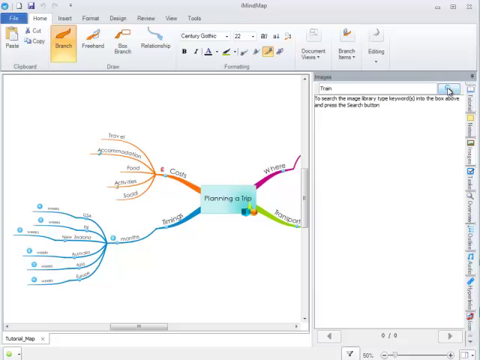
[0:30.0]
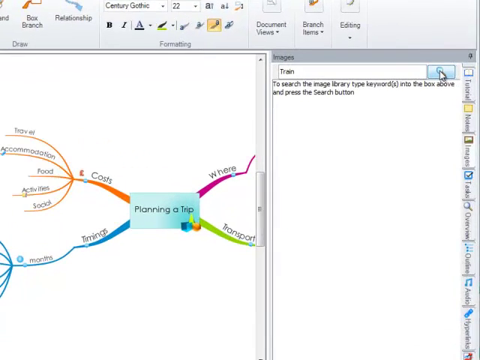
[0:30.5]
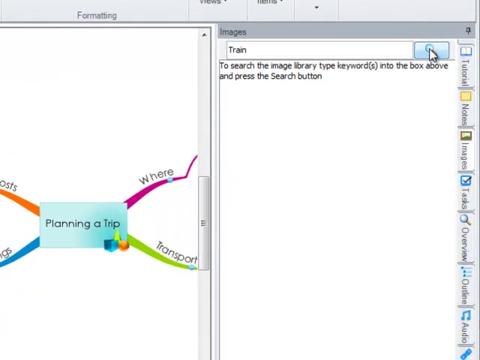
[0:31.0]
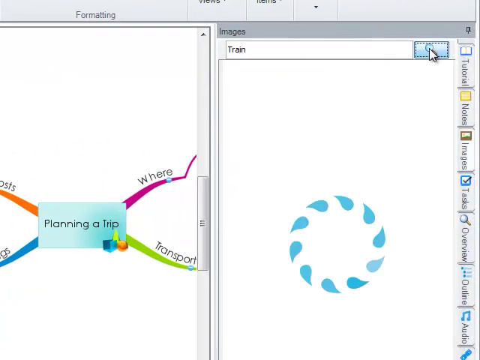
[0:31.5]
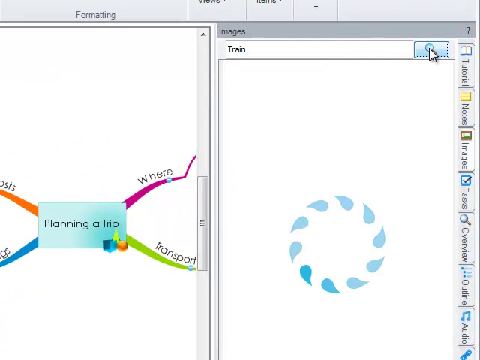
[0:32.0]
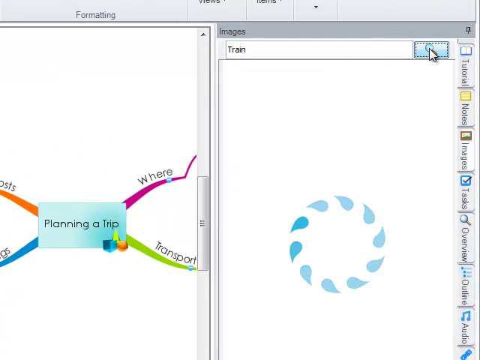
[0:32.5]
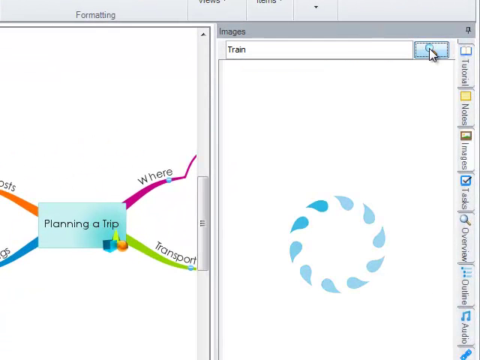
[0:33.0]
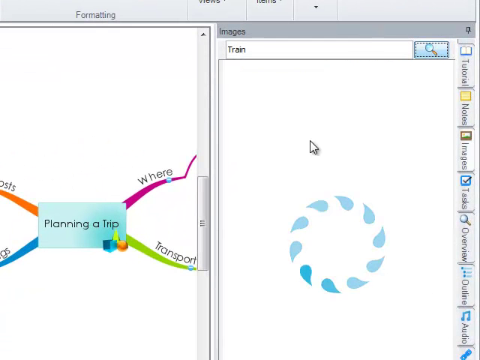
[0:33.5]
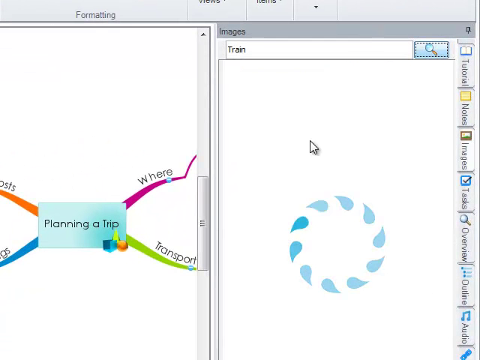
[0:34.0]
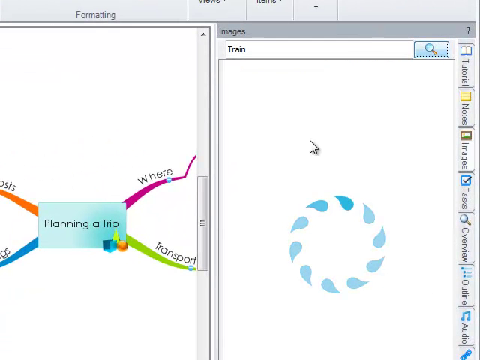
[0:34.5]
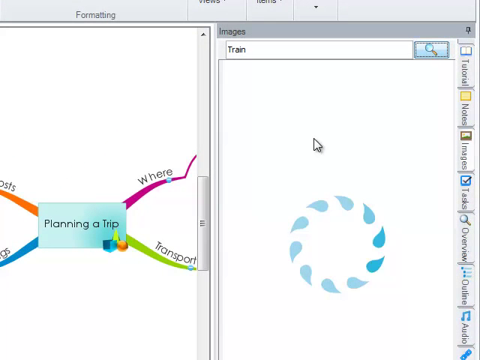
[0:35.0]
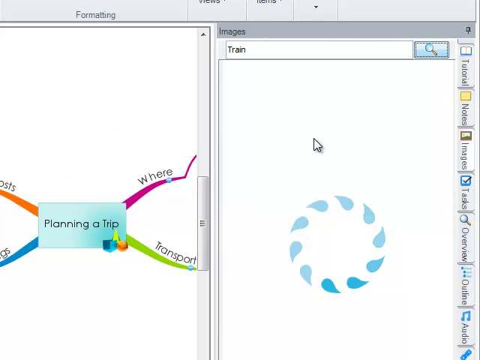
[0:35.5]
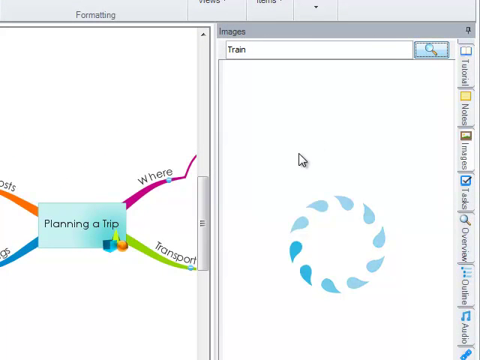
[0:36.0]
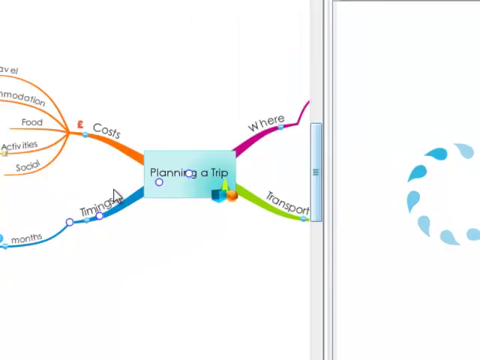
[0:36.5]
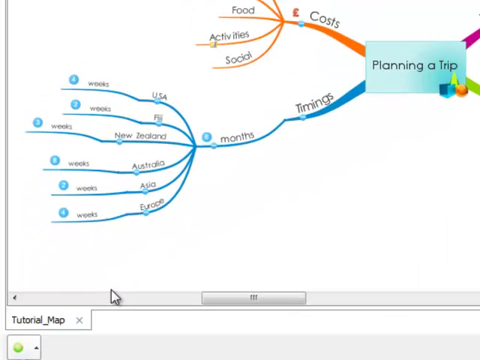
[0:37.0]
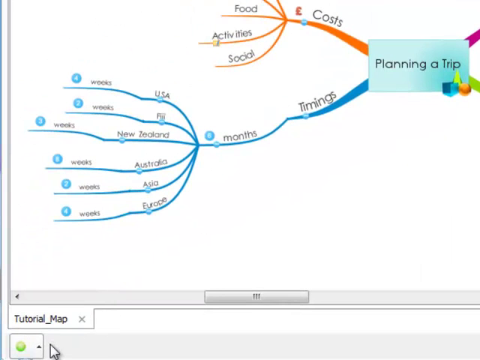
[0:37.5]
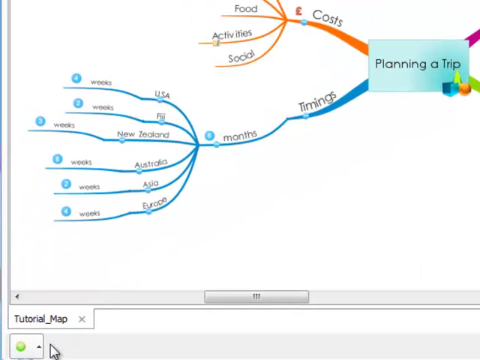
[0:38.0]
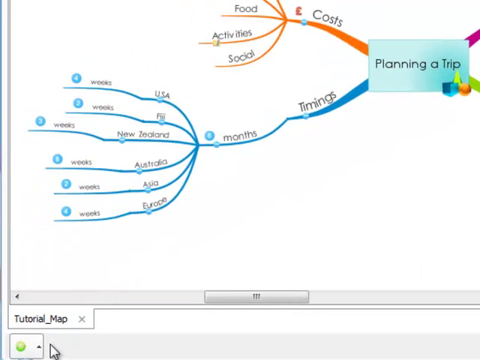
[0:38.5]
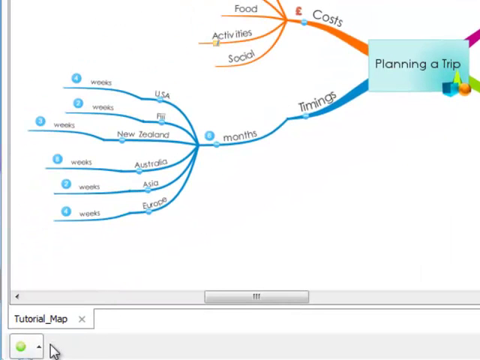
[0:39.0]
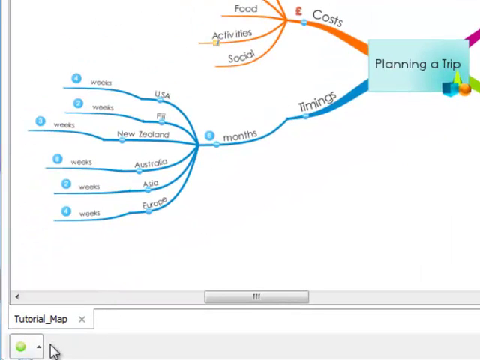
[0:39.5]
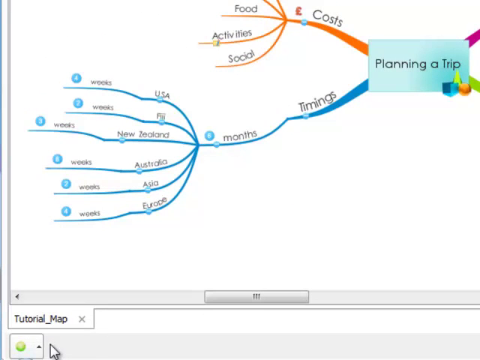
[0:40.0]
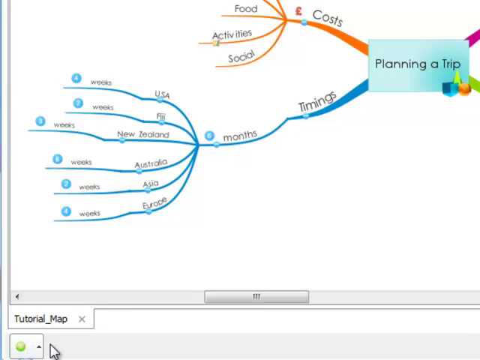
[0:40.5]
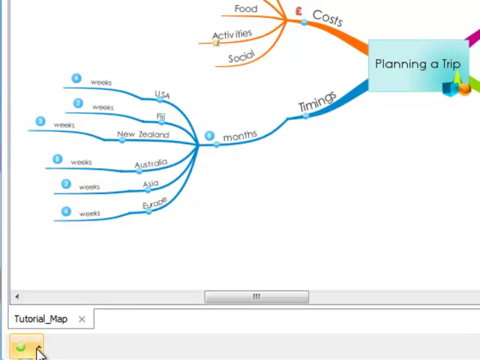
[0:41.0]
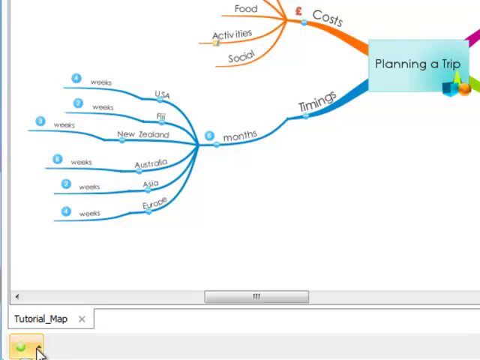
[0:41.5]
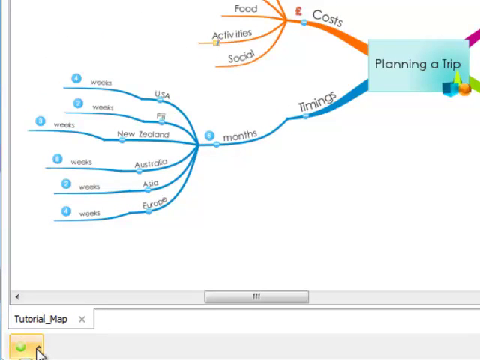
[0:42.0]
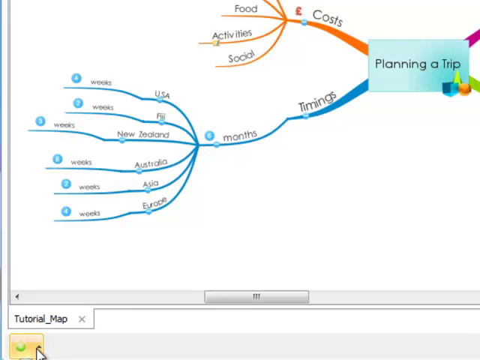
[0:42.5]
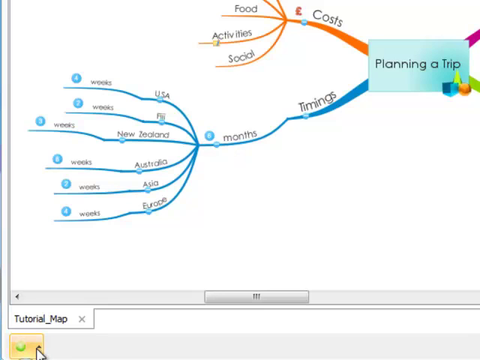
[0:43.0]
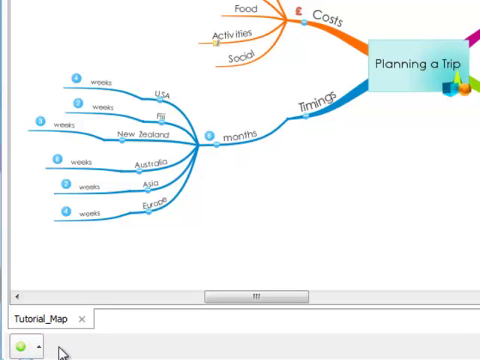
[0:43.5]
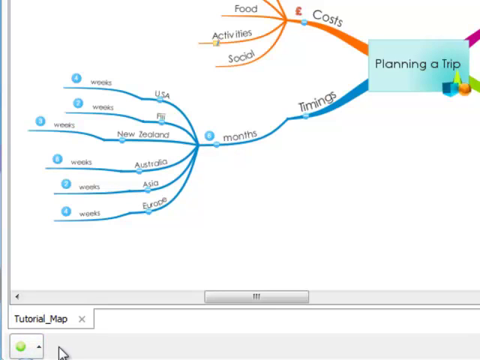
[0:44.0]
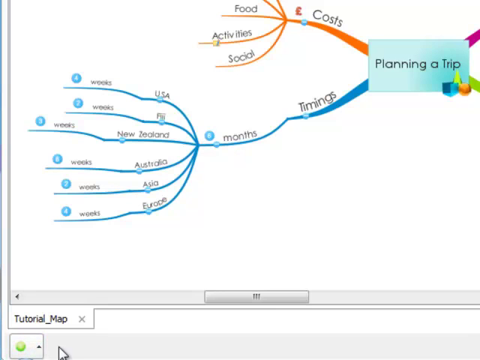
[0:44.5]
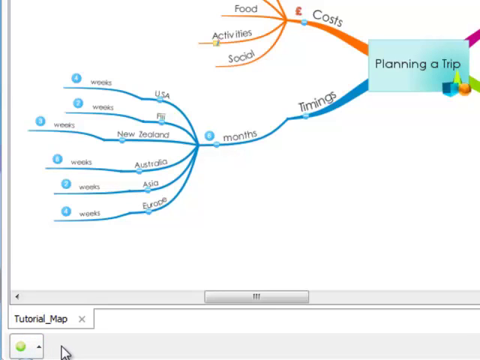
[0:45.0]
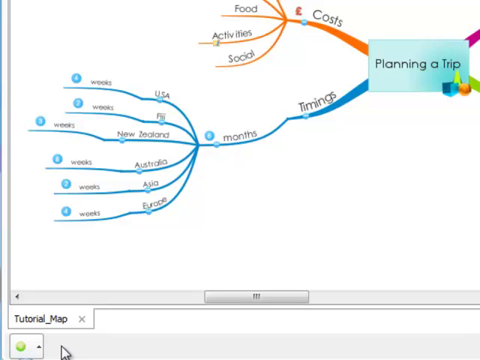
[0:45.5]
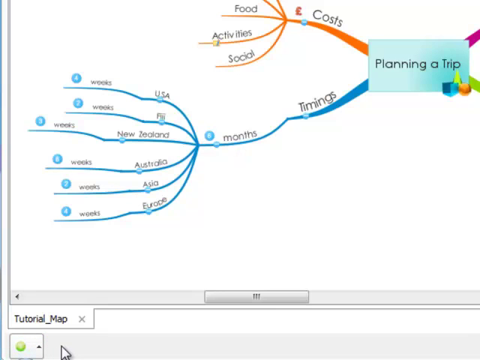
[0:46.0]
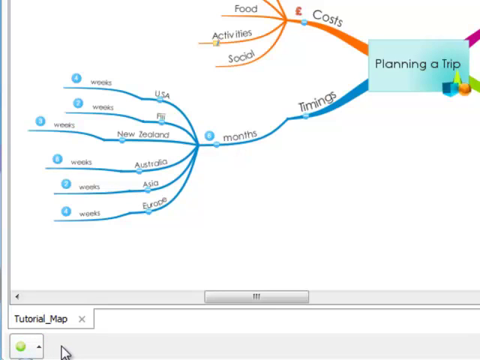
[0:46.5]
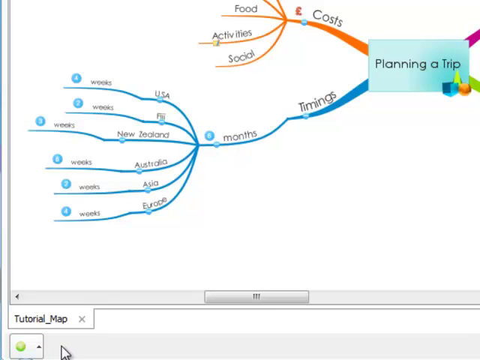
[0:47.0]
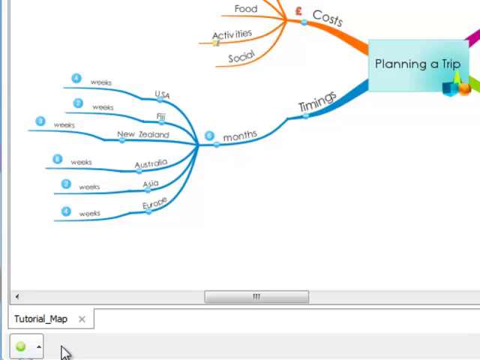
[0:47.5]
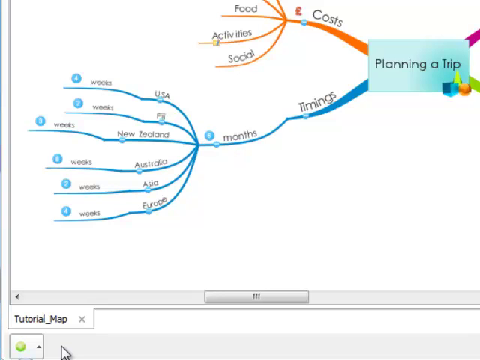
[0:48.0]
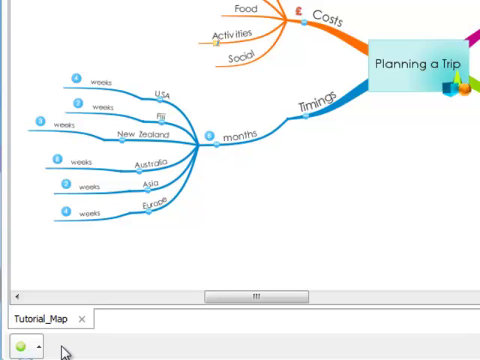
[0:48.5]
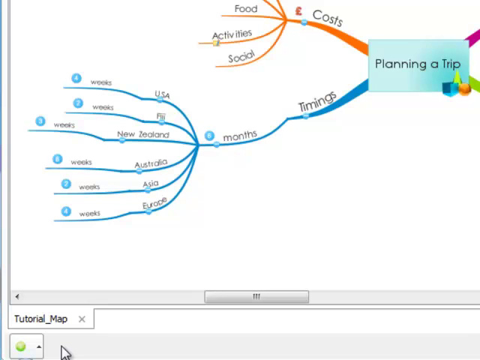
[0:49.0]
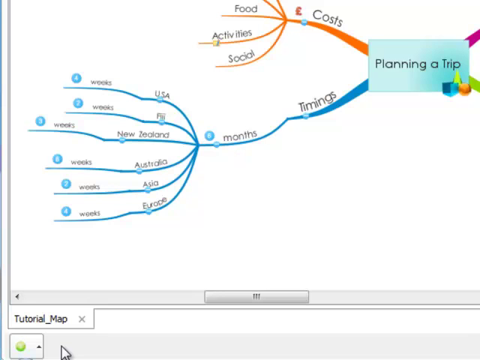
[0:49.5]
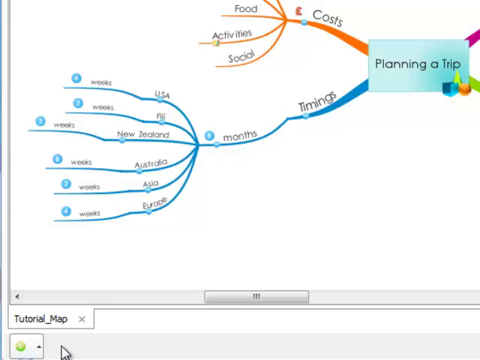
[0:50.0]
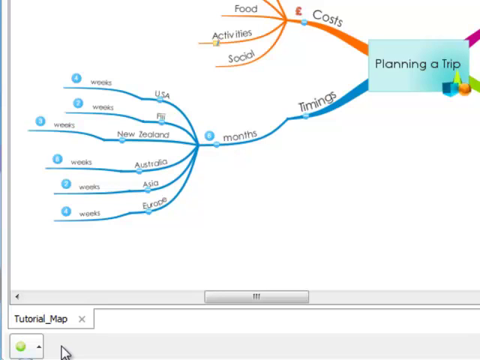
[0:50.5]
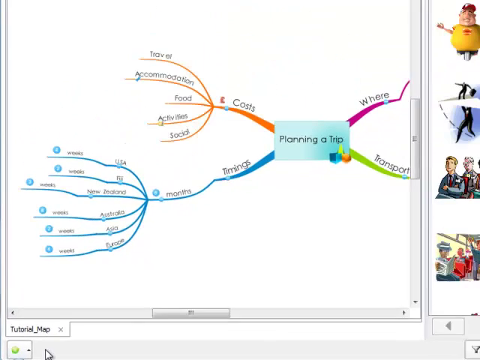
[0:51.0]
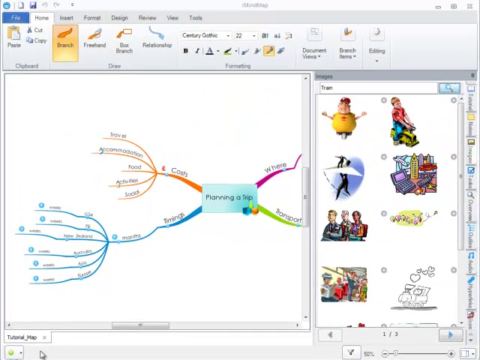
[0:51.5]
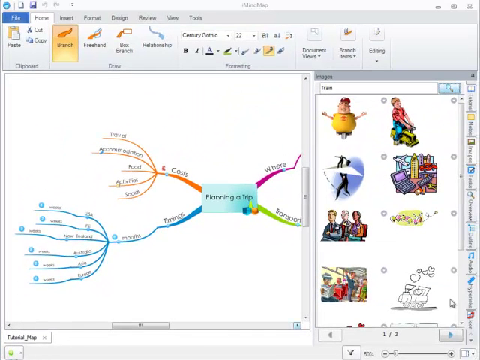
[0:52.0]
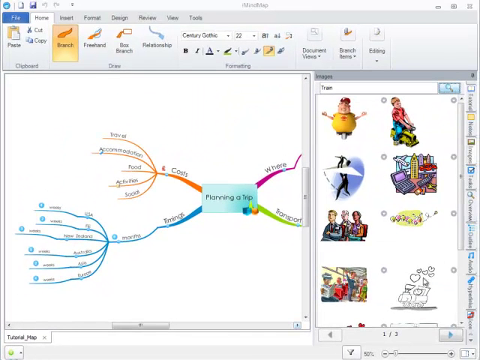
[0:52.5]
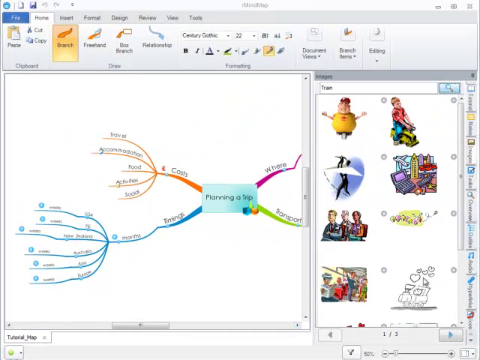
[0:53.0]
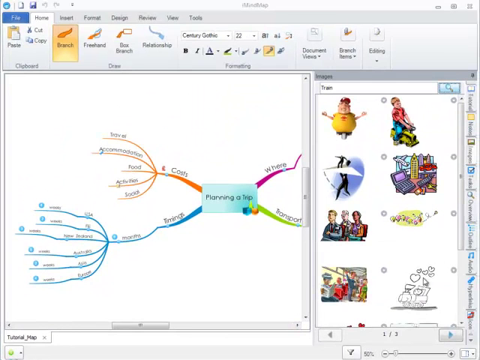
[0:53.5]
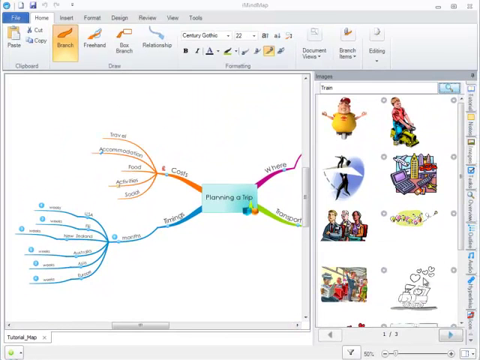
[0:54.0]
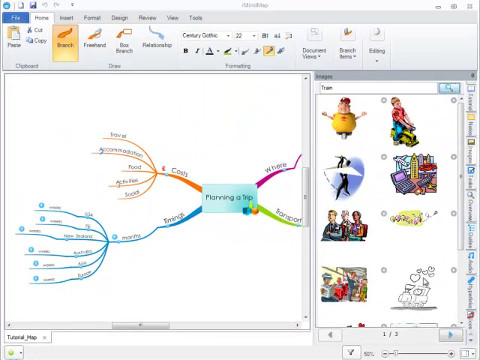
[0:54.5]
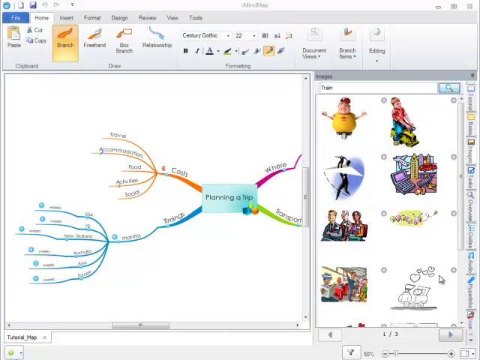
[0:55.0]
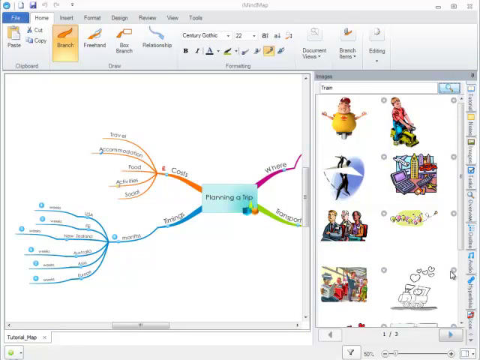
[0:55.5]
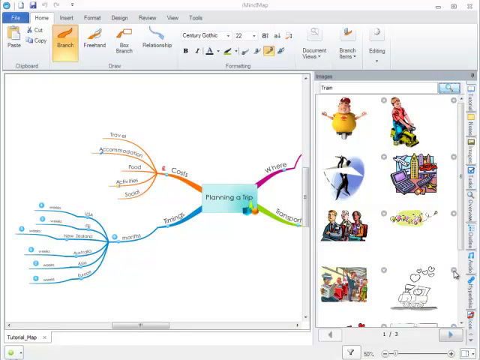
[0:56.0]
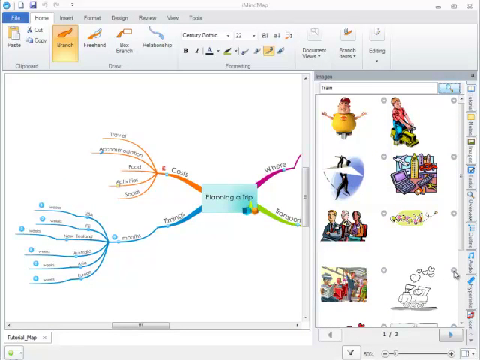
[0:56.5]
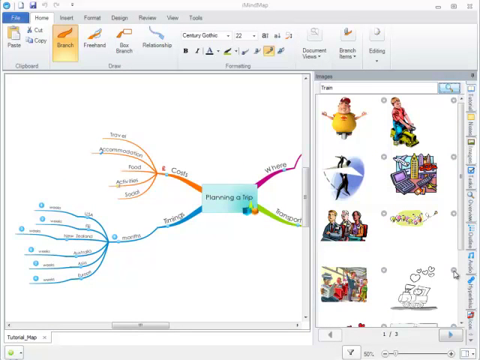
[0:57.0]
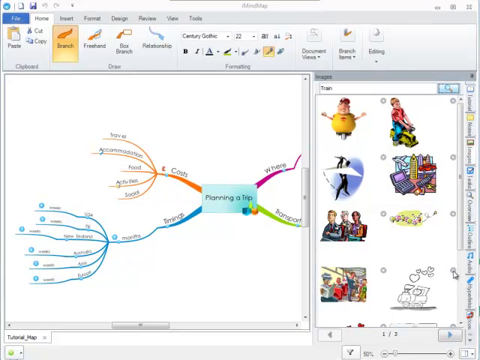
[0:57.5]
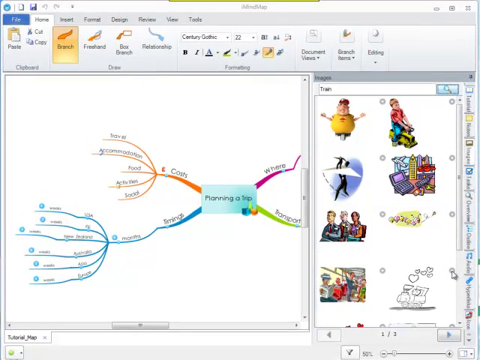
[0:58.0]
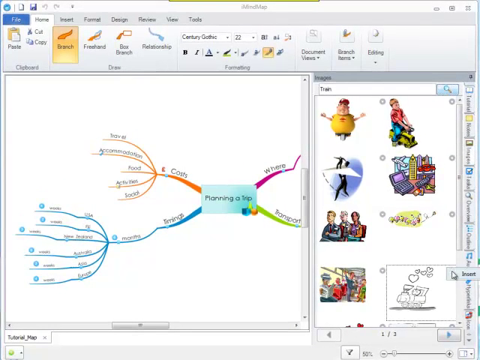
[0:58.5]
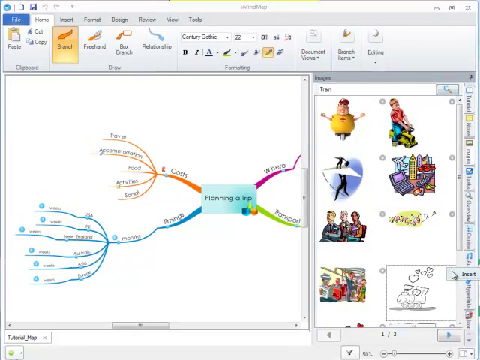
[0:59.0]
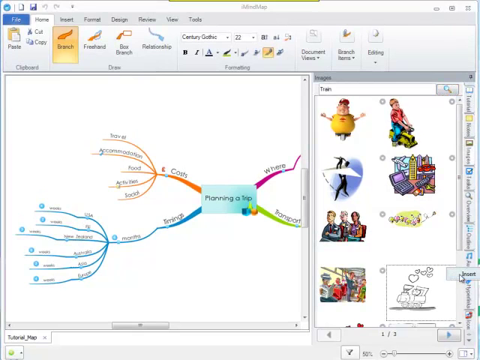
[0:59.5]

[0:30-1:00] The template is zoomed in, showing different sections. There is a search bar at the bottom; just above it is written "images", and on the search bar is written "trail". The view zooms in on the lower left, where "planning the trip" is clearly visible in the middle. The purple line says "where", meaning the destination, and the green line is the transportation system. The view zooms out; the blue line is timings and the orange line is the costs. Under timings, different countries are visible. On the right, there are different cartoon characters.